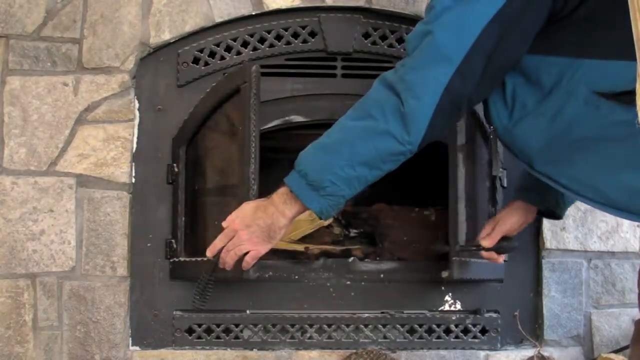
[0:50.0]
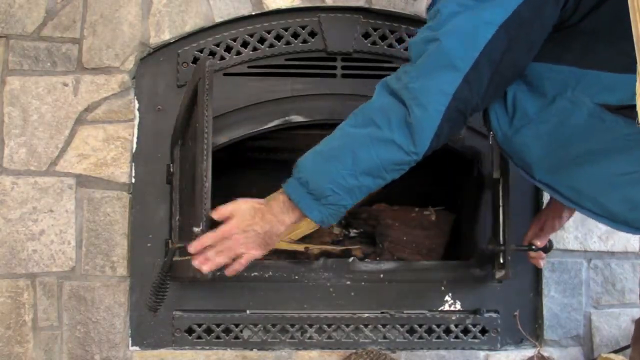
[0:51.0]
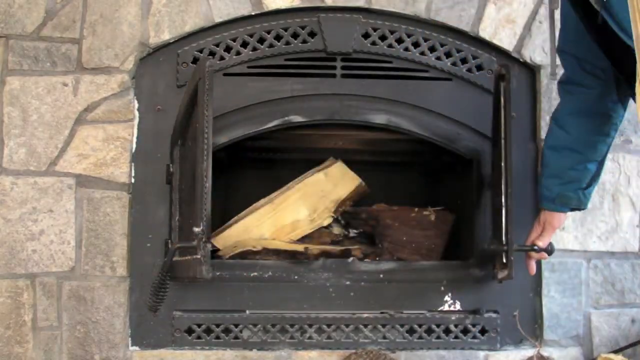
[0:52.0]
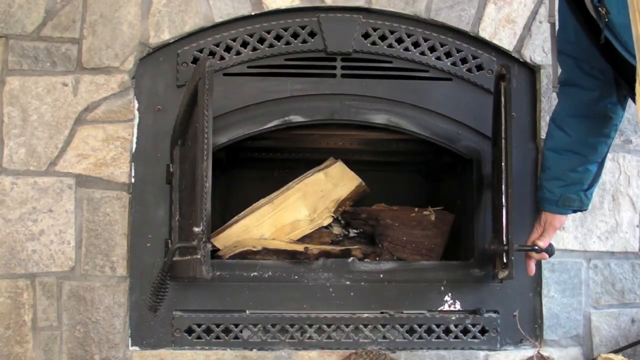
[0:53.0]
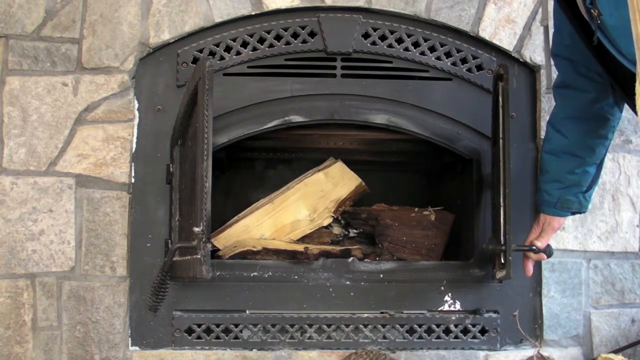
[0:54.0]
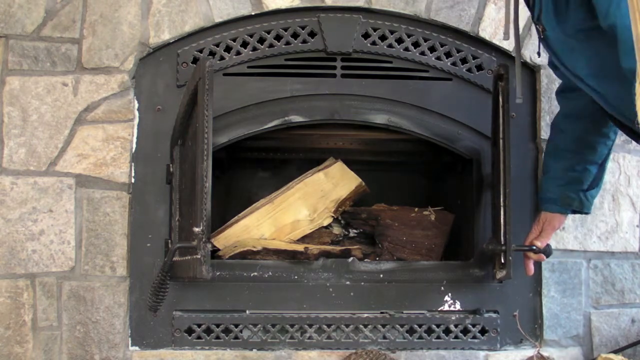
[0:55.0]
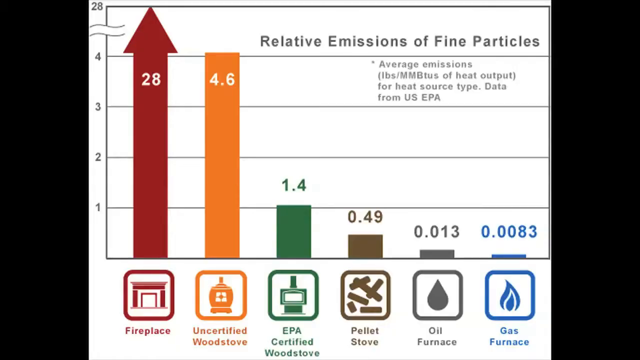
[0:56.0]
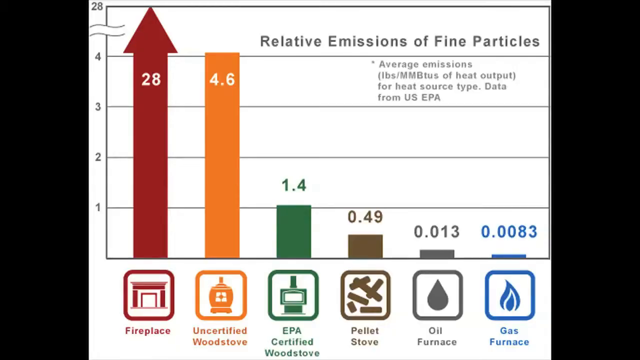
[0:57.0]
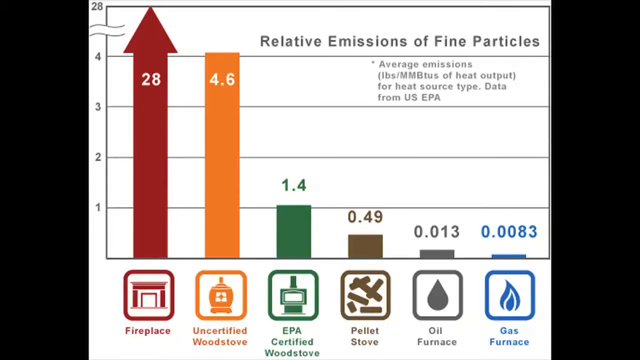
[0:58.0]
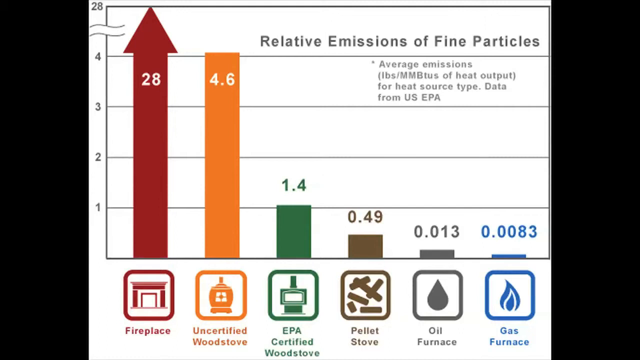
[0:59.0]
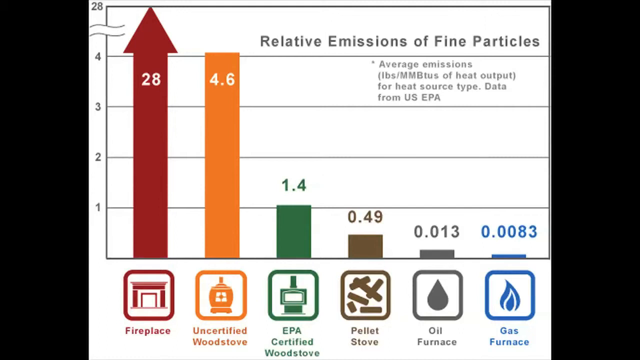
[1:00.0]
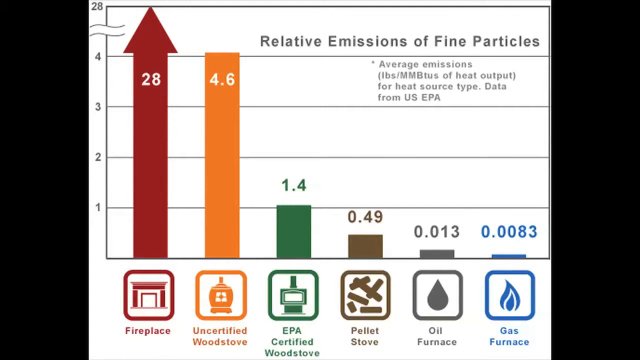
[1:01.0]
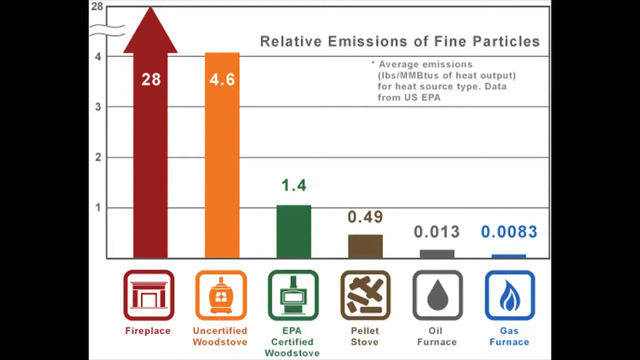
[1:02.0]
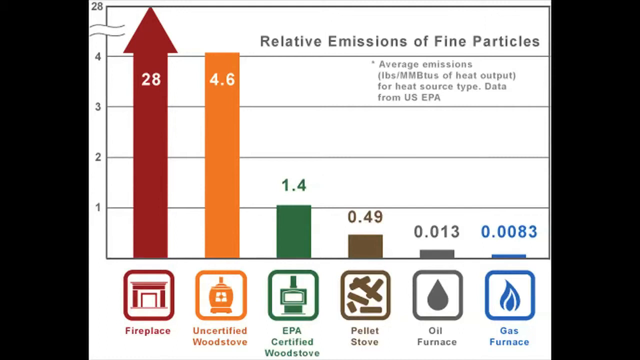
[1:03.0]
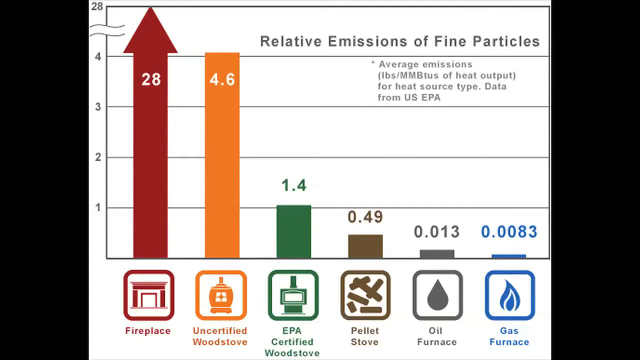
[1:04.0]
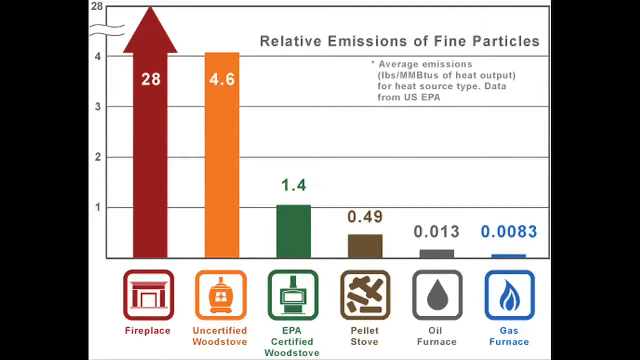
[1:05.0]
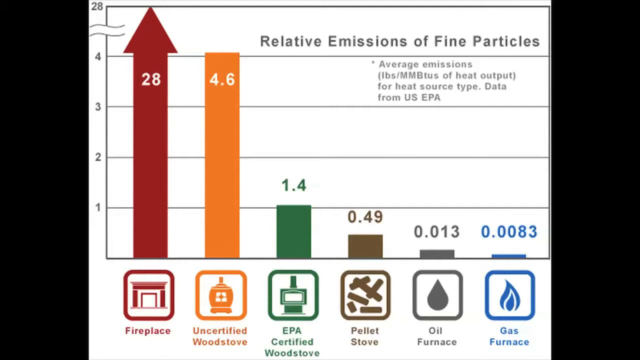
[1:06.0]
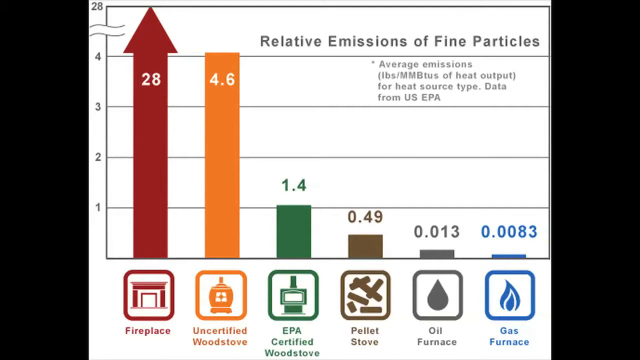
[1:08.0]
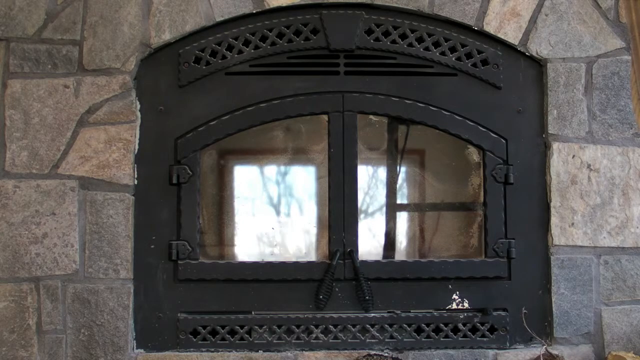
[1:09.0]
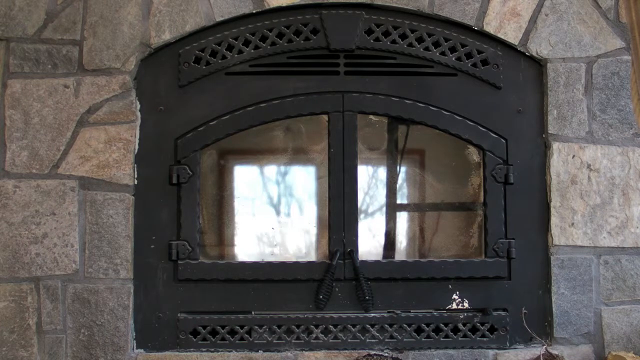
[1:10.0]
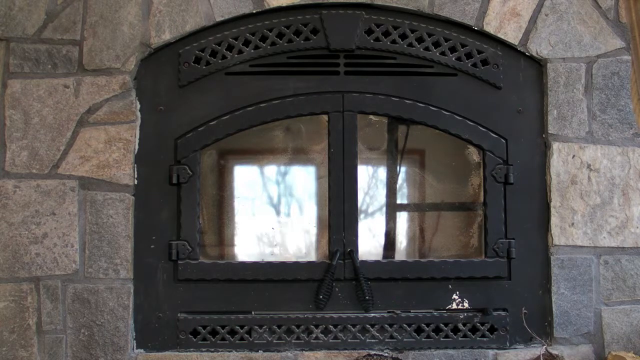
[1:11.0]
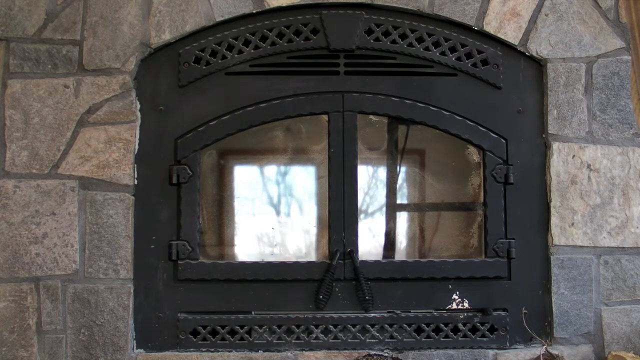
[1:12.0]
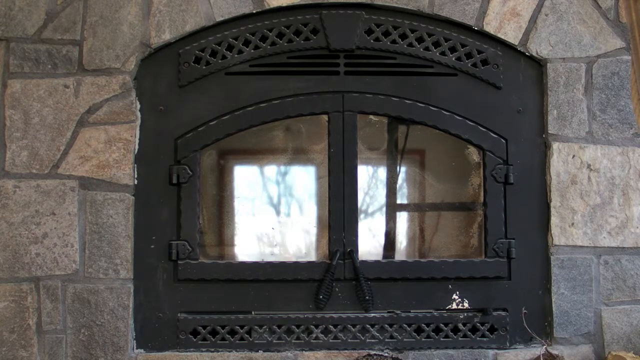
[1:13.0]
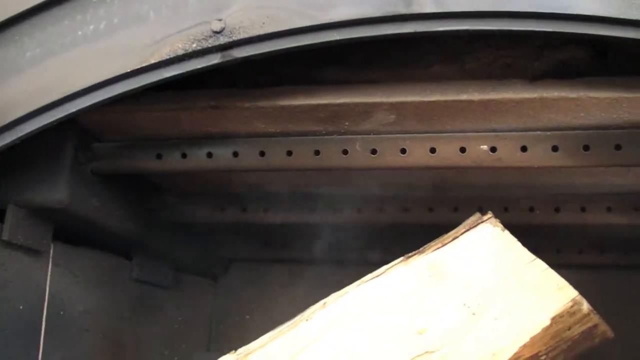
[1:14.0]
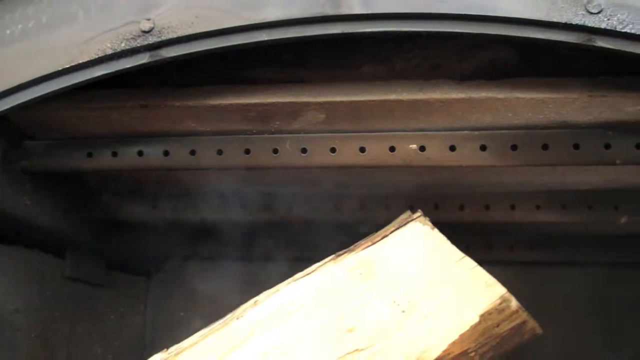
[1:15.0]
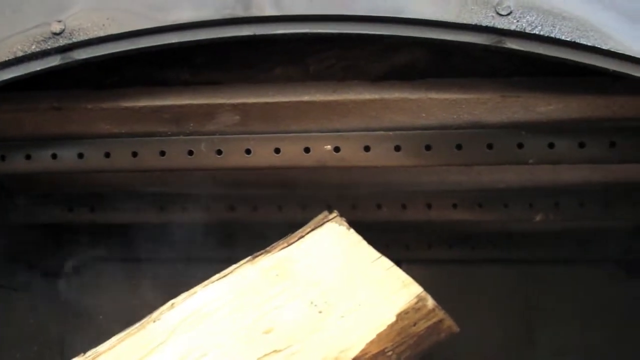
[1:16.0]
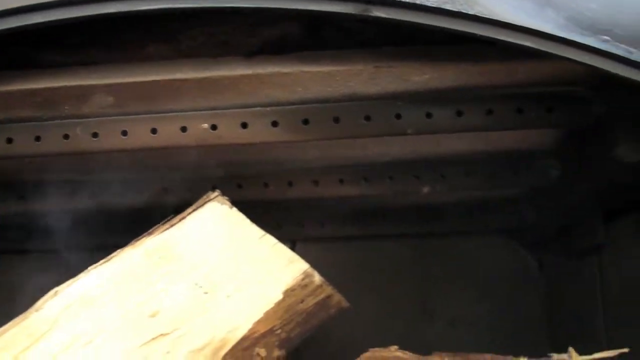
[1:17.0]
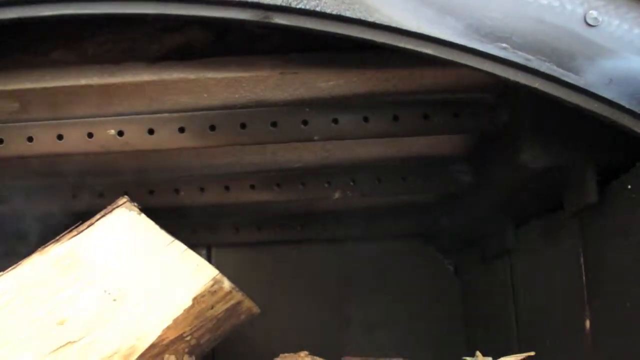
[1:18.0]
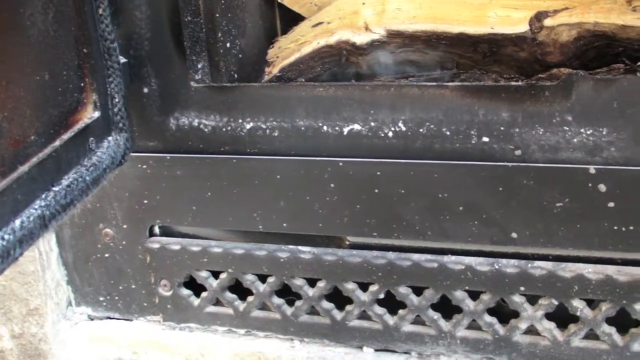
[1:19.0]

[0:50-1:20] A man opens the fireplace, showing how it is installed and how the firewood goes in. The fireplace is small and neat, and there are fans inside it. A chart shows relative emissions of fine particles from heat source types, with data from the US EPA; the values shown are 28, 4.6, 1.4, 0.49, 0.13 and 0.0083. The fireplace is stuck on the wall and is hard to recognize as a fireplace until it is opened. It is then shown heating up.